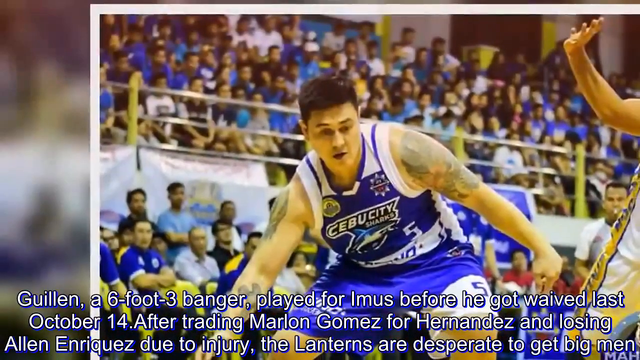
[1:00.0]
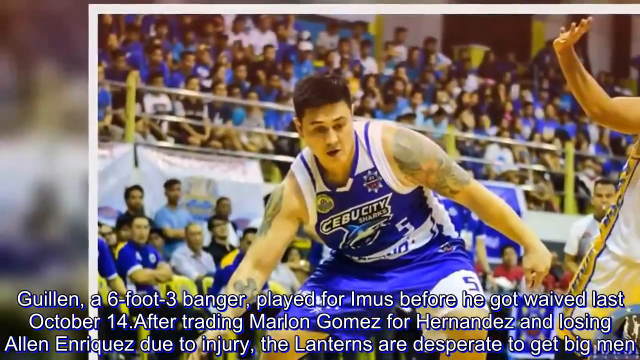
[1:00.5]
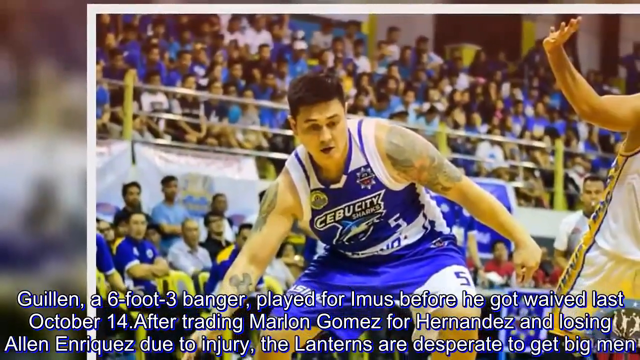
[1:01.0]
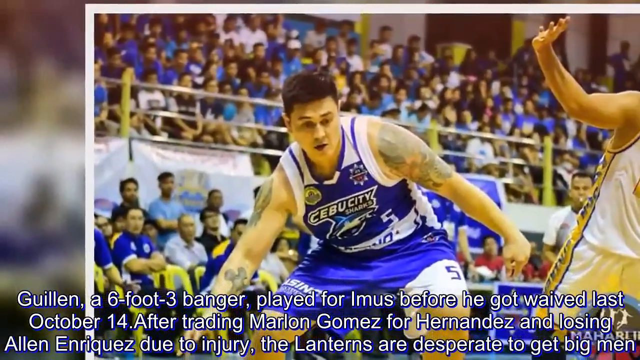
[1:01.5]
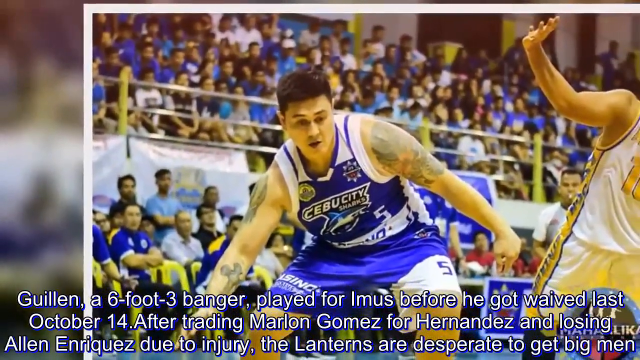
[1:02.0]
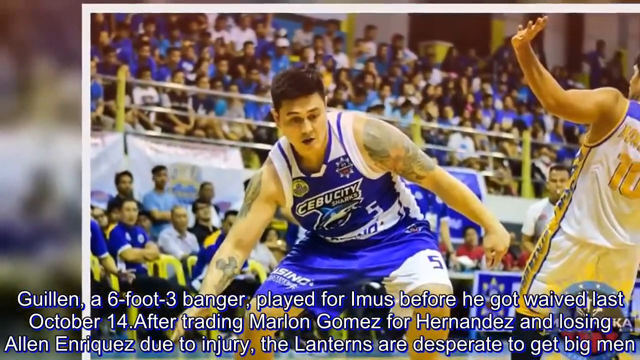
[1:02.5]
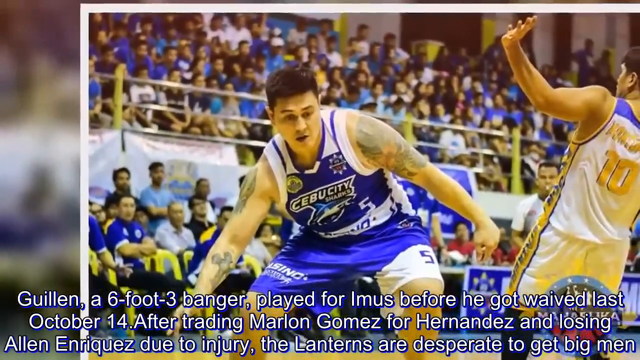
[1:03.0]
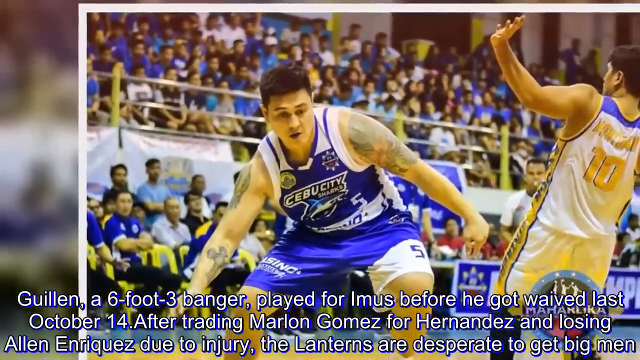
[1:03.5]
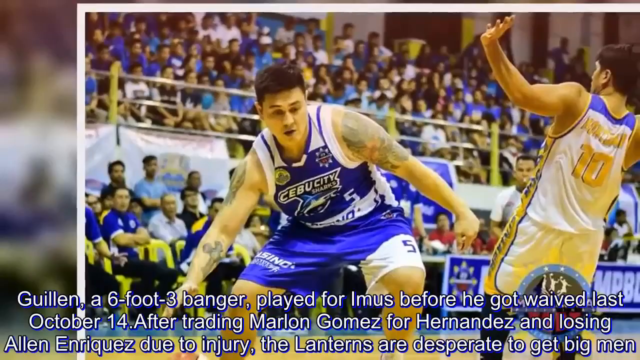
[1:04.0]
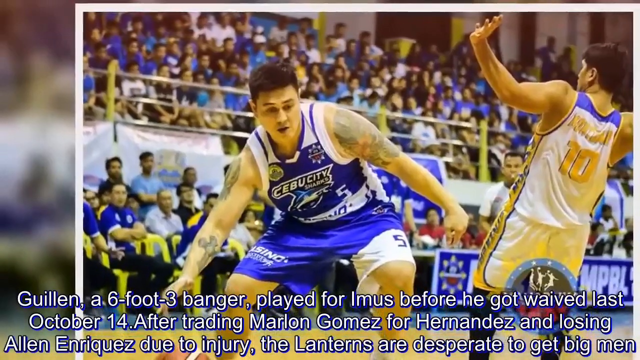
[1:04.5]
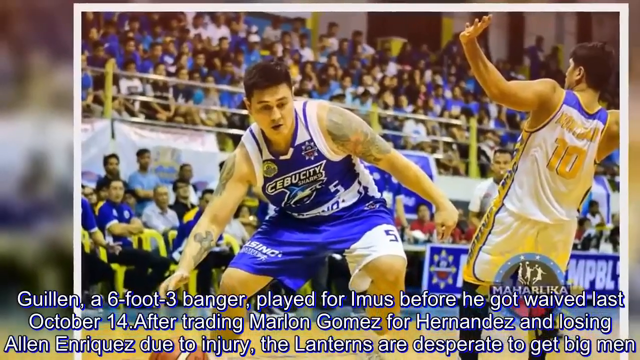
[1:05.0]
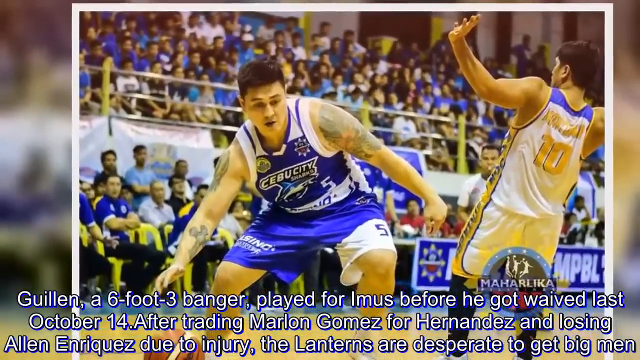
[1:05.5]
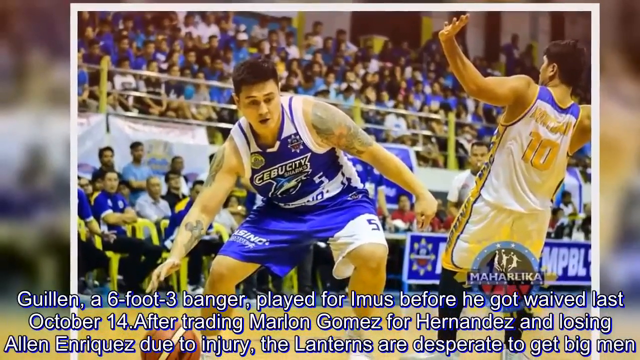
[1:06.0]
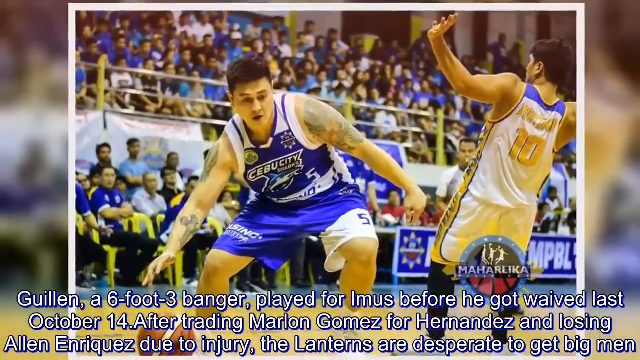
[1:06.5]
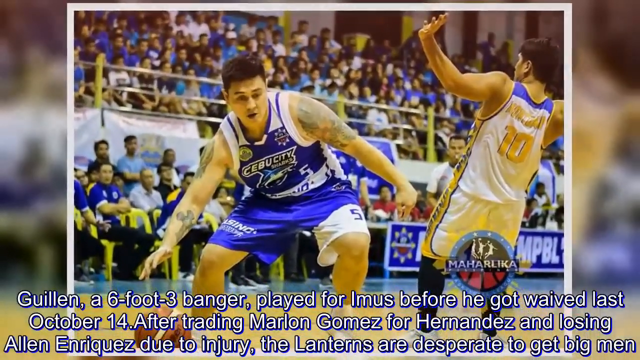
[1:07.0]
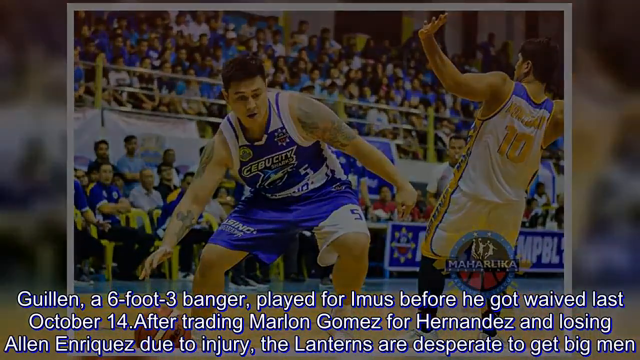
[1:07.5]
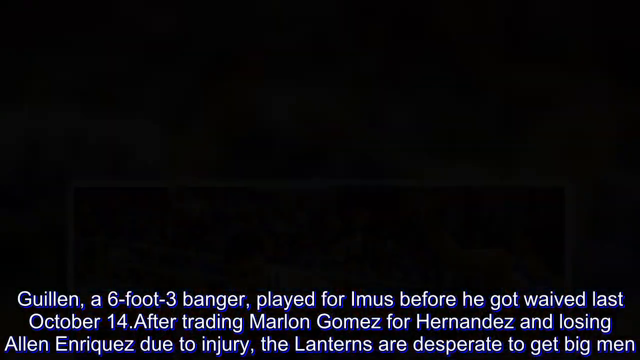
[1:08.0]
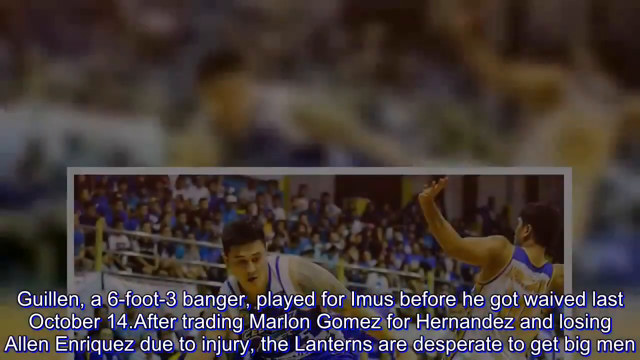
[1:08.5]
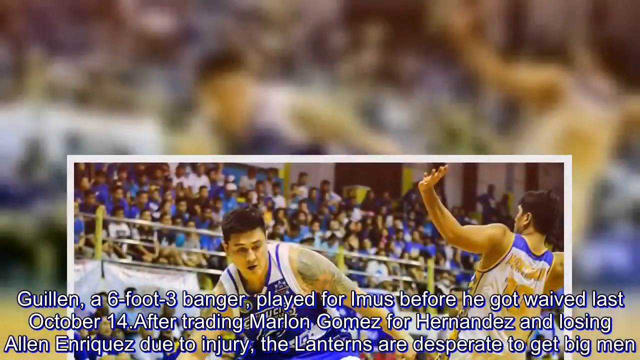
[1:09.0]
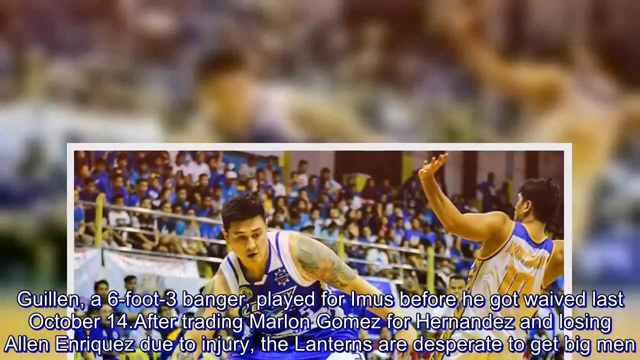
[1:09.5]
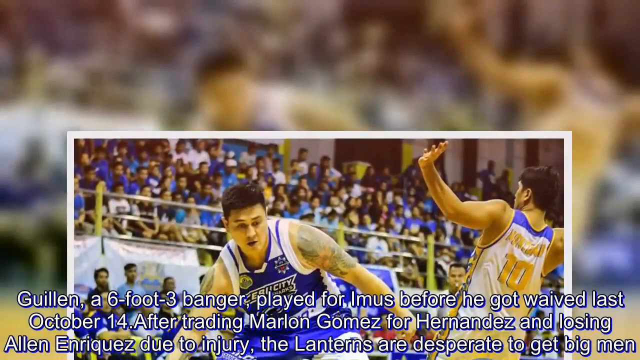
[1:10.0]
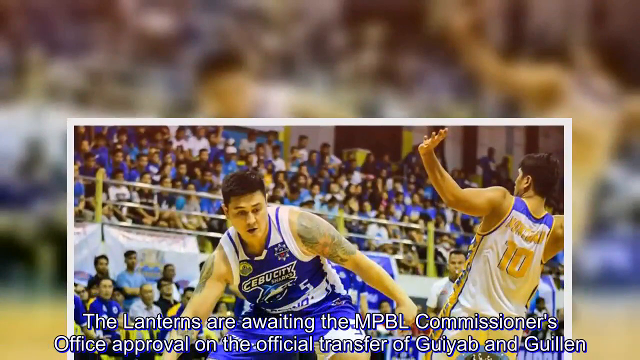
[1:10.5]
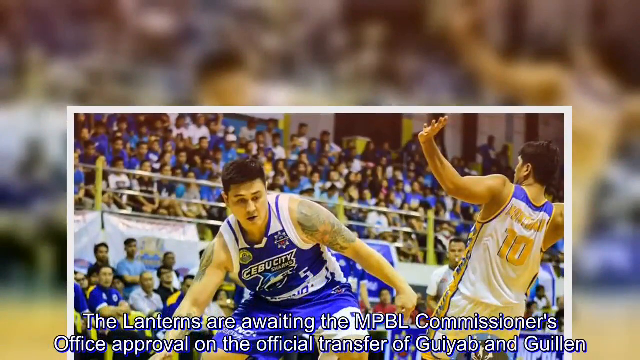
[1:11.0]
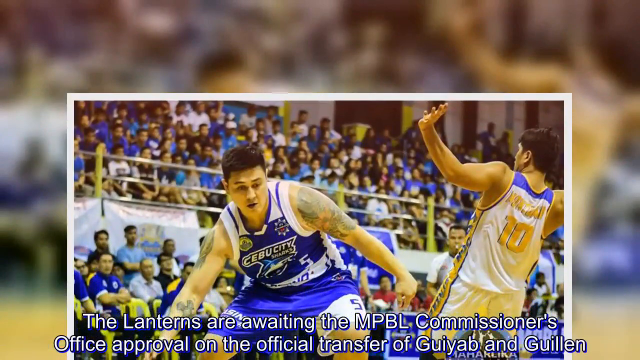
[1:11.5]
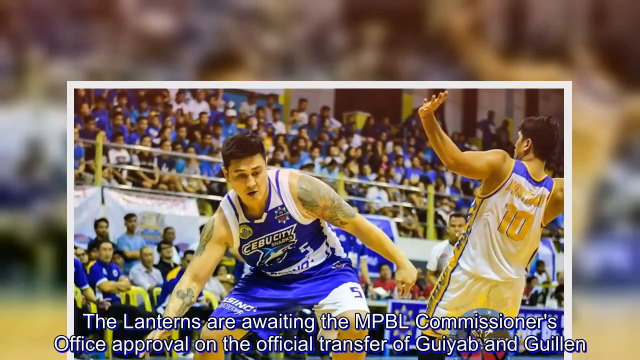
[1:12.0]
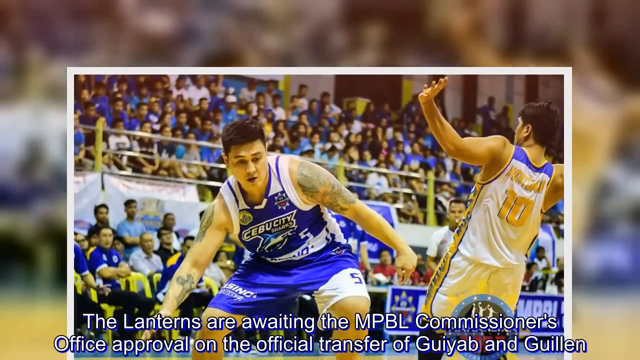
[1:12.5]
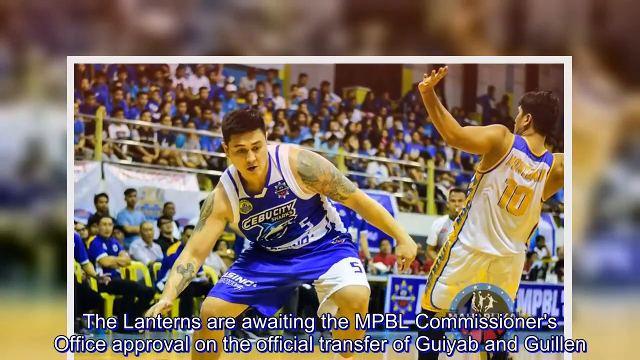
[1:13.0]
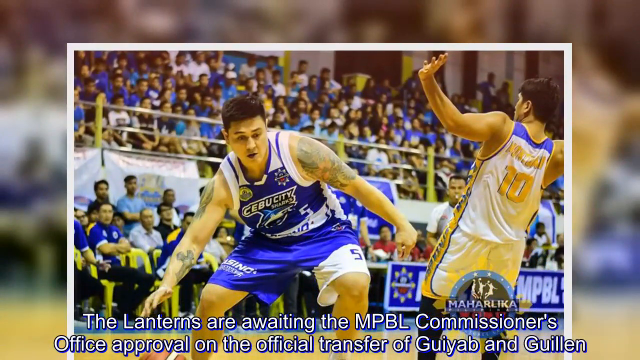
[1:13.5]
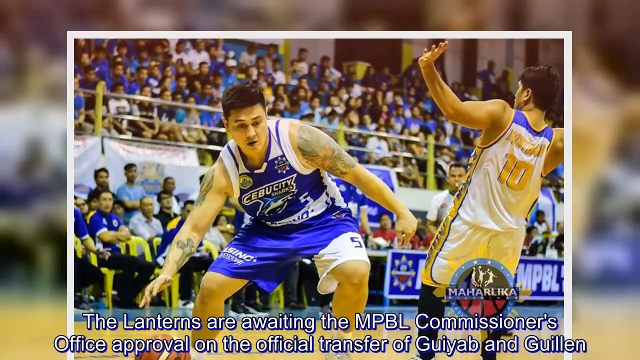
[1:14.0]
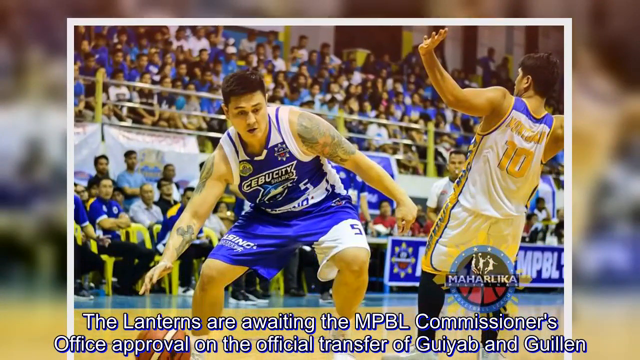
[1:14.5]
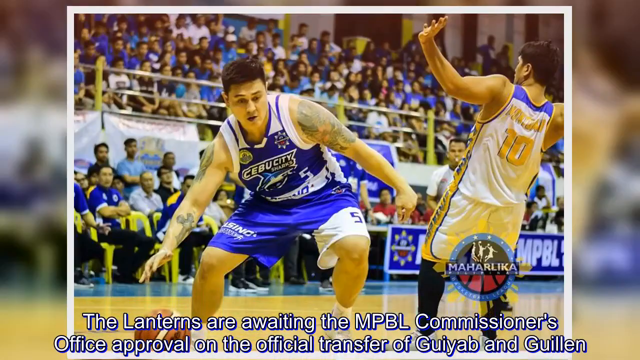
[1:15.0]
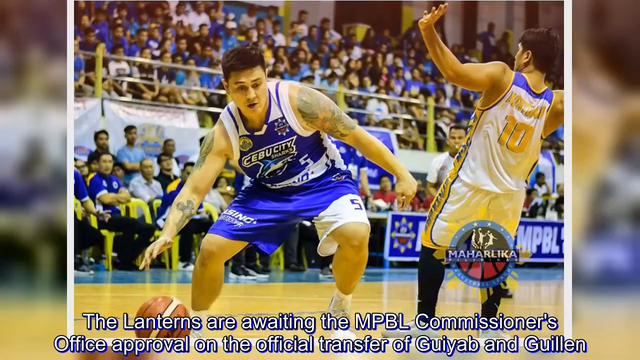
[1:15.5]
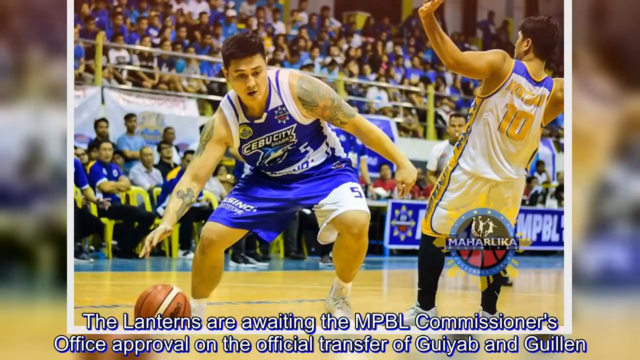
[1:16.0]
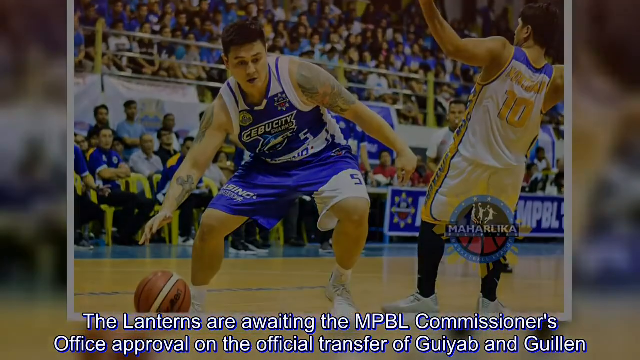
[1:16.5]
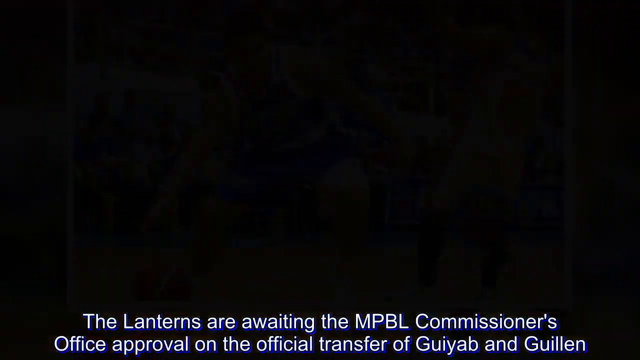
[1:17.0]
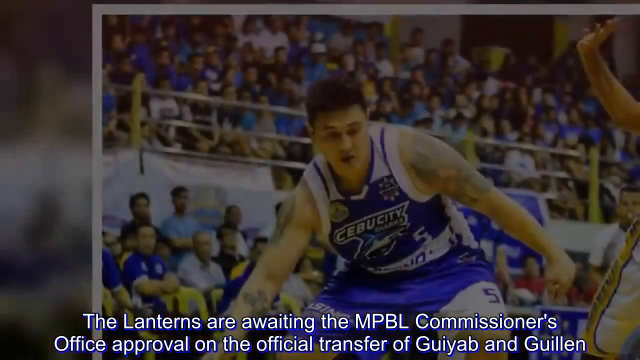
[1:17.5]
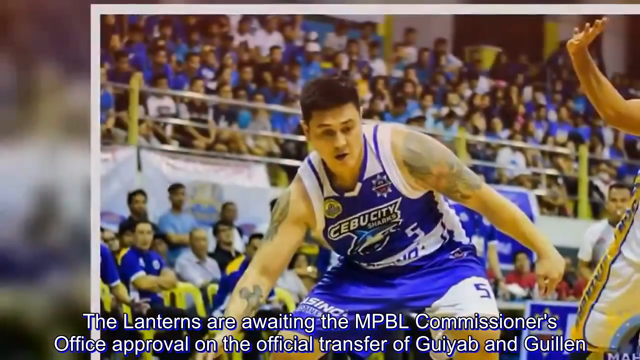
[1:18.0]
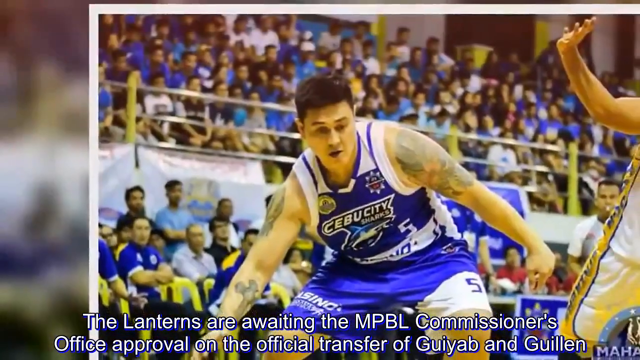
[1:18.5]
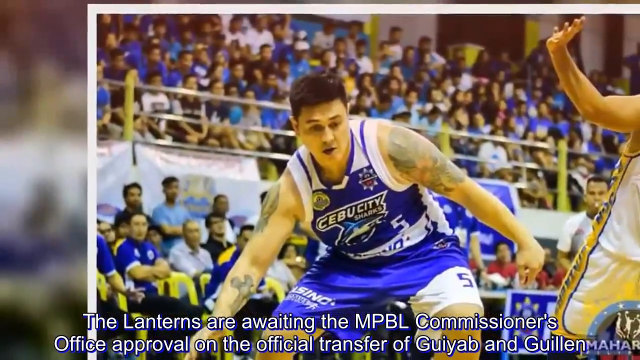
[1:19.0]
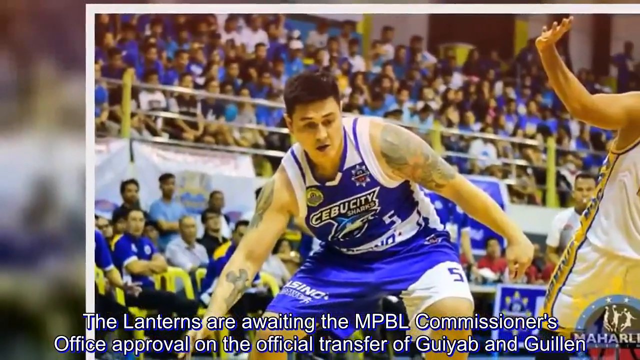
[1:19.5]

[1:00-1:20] The text describes a 6'3 player who played for another team before being waived last October 14th, and says the Lanterns are desperate to get a big man after trades and an injury and are waiting for commissioner's office approval of the official transfer.